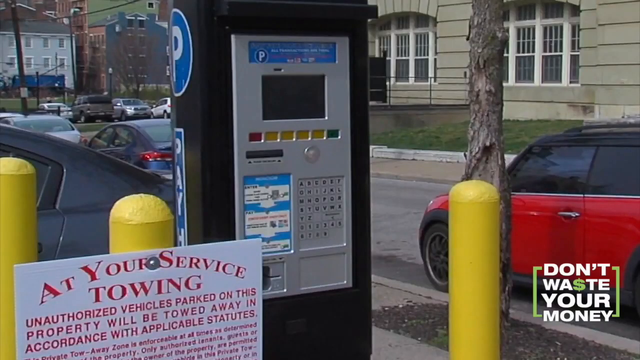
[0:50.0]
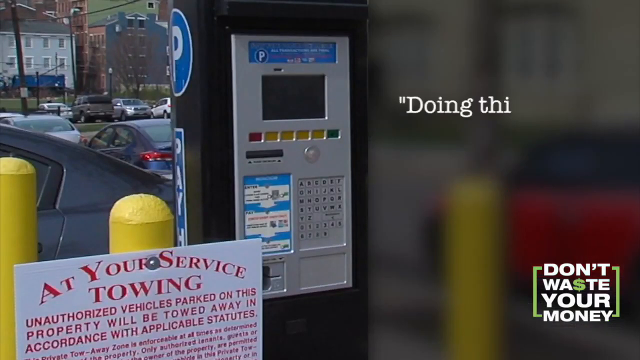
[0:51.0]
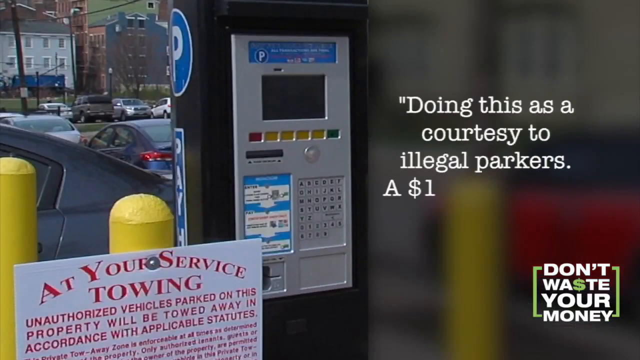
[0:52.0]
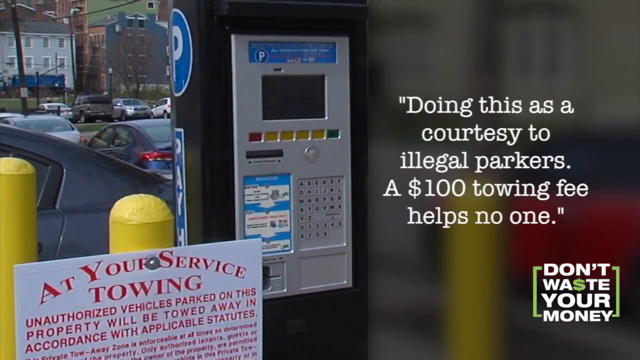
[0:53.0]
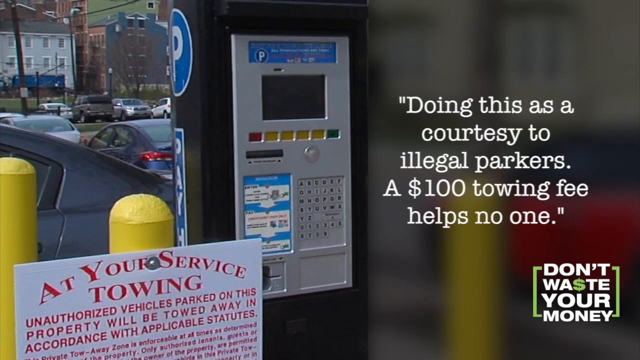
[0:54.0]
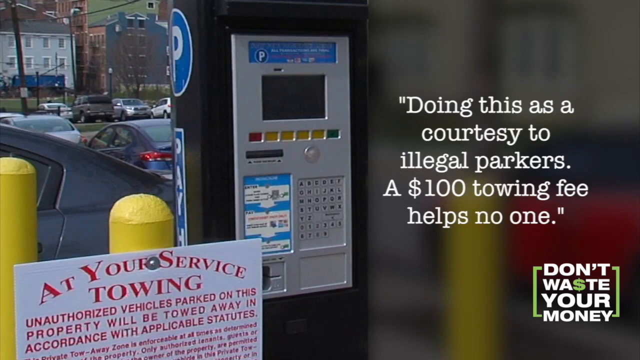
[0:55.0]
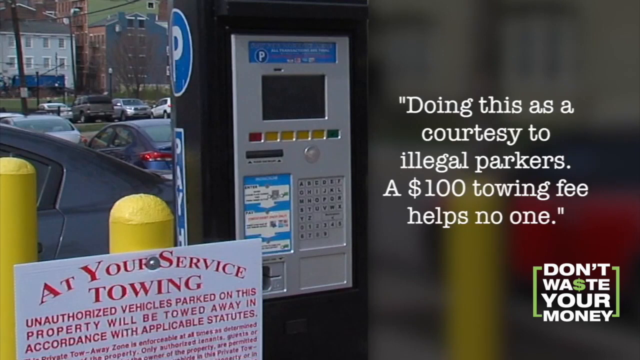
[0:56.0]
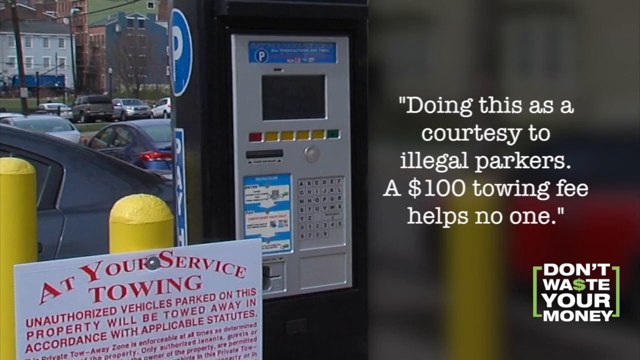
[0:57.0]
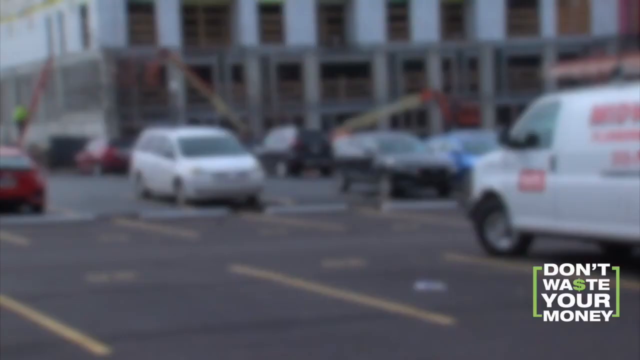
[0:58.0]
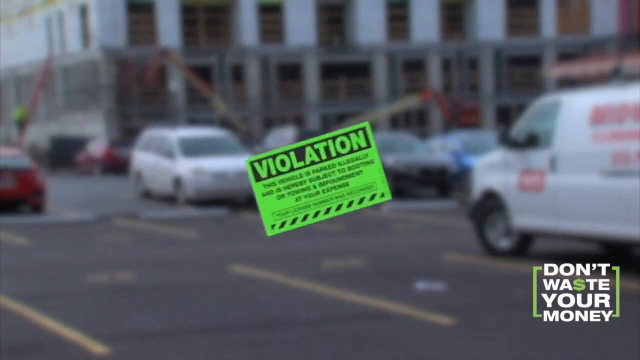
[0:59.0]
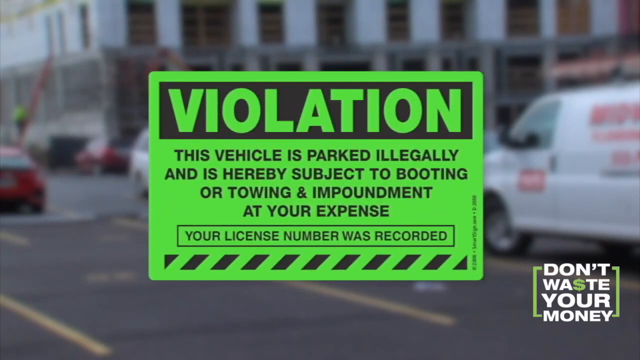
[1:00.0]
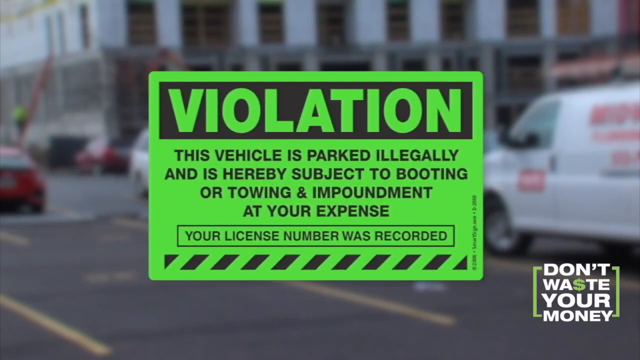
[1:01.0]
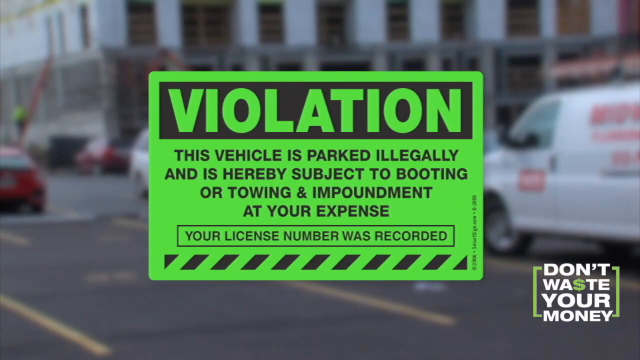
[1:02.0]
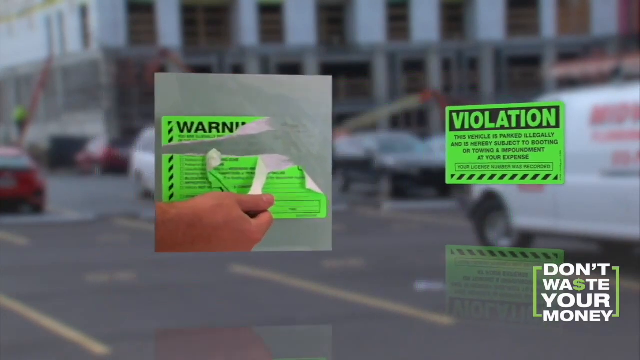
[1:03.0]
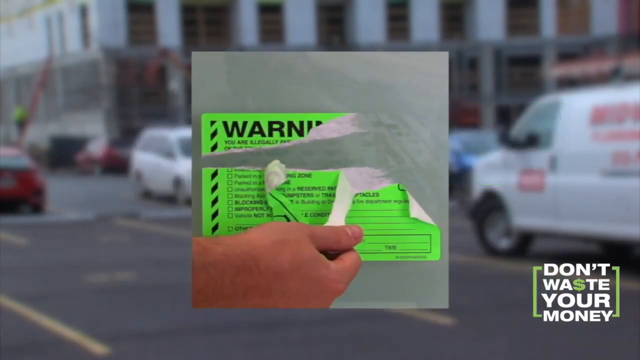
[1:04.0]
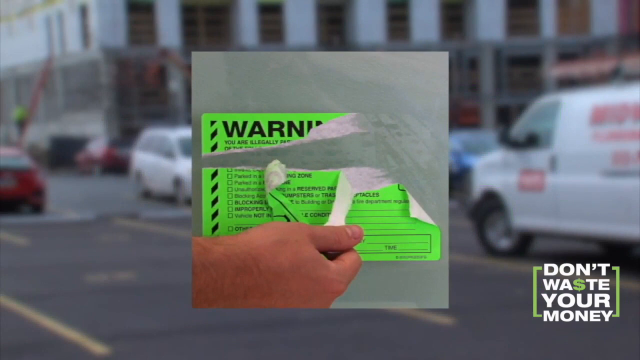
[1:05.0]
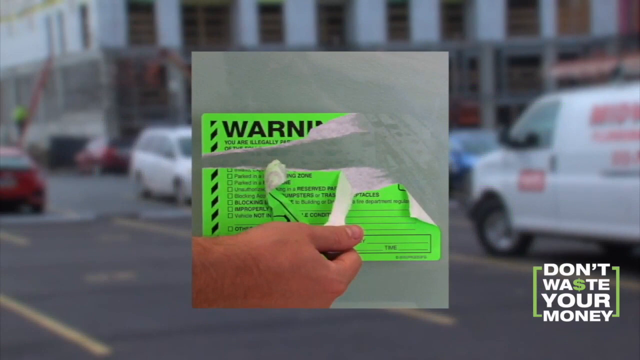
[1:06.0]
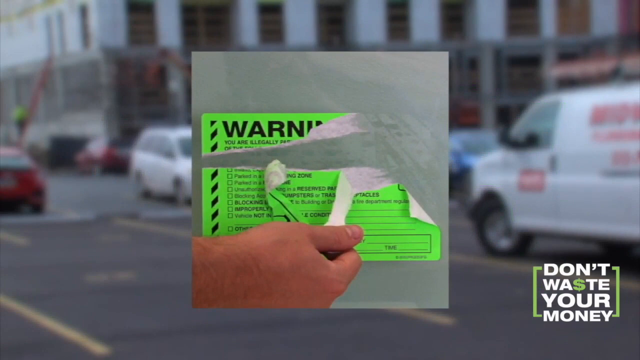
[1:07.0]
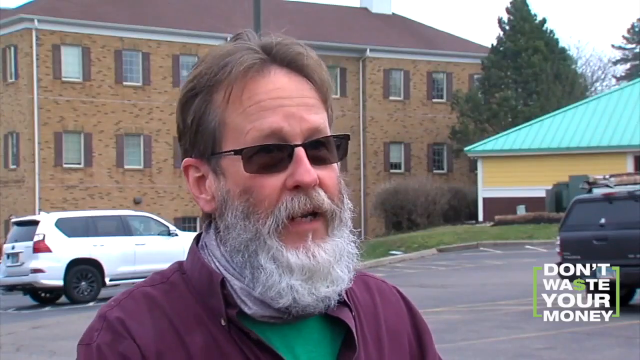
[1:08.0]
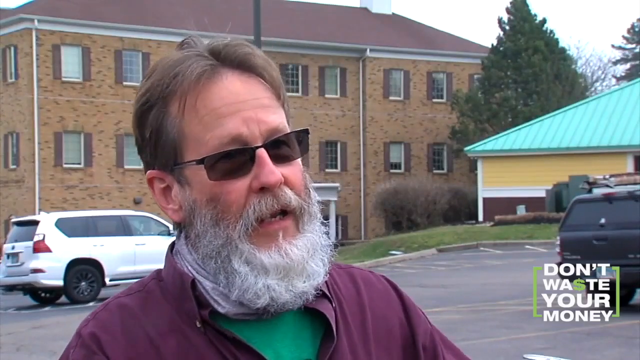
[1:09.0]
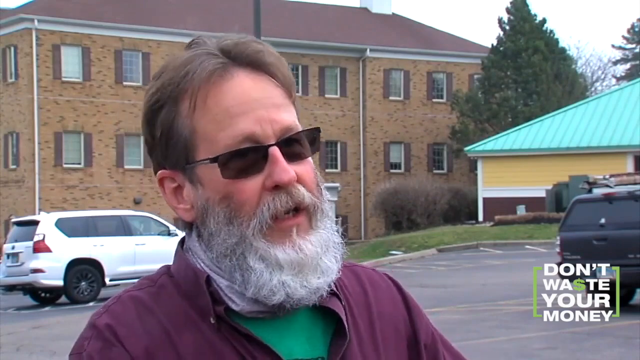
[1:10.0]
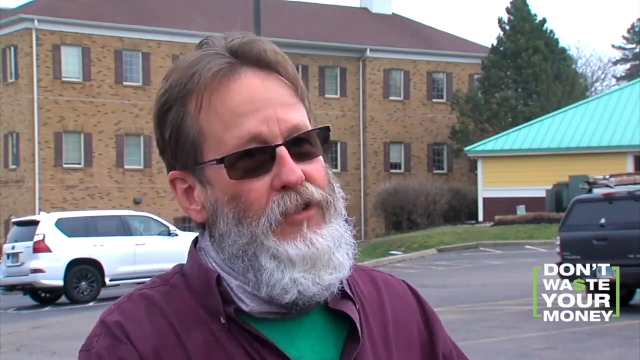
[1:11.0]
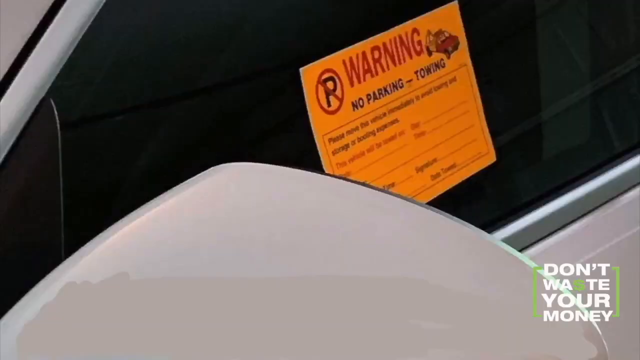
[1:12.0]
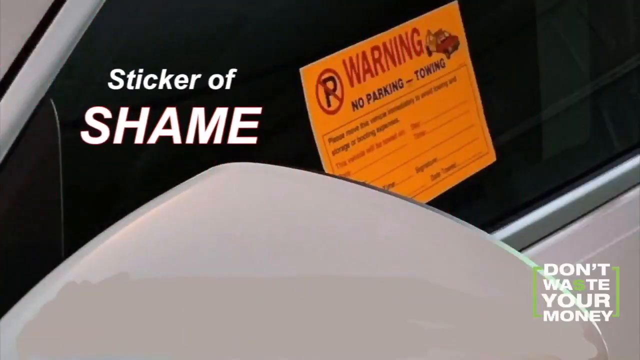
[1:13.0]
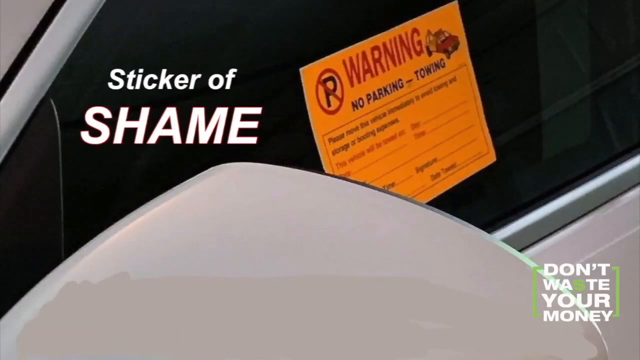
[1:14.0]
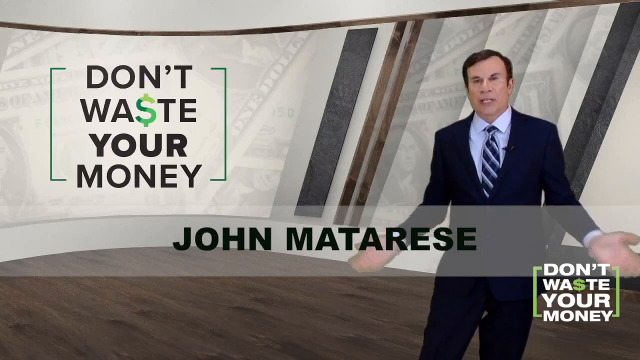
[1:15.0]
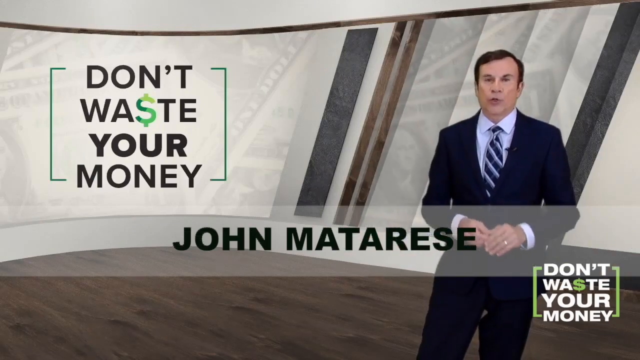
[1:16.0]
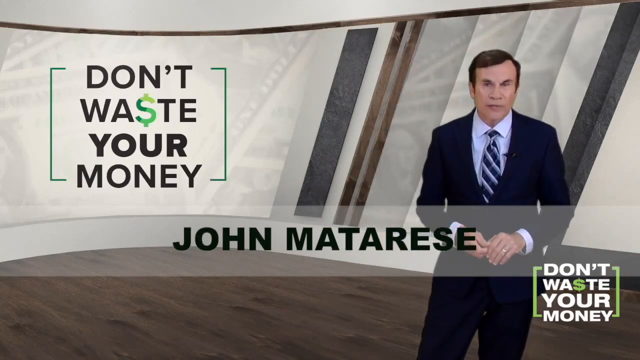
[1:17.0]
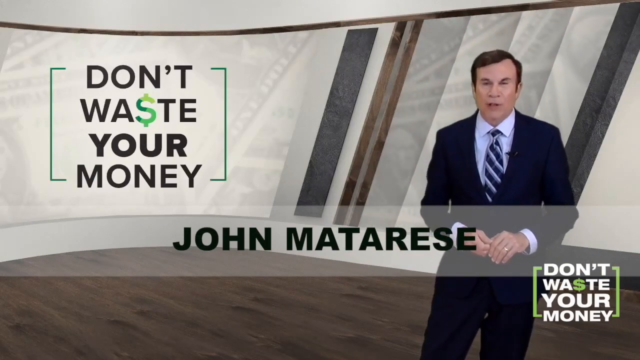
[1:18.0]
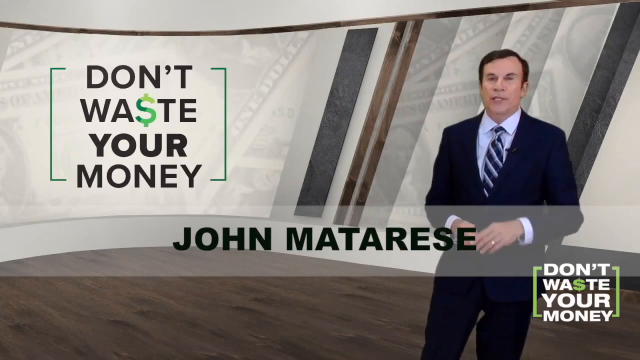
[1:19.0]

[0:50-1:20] The video appears to be for a report called Don't Waste Your Money, whose logo is in the lower right corner. The images all relate to no parking or towing decals. First, a pay kiosk in a parking lot is shown with a sign in front of it that says "At Your Service Towing." Text appears on the right side of the screen reading "Doing this as a courtesy to illegal parkers. A $100 towing fee helps no one." Next is a close-up of a green no parking sticker that says "Violation. This vehicle is parked illegally and is hereby subject to booting or towing and impoundment at your expense. Your license number was recorded." Then someone is shown ripping this label off a car, with part of it missing and in someone's hand at the bottom. A man with a full gray beard and sunglasses is interviewed, speaking to someone off camera. There is a close-up of a no parking towing notice attached to a car, with the text "Sticker of Shame" appearing next to it. Finally, a man stands in a studio speaking to the camera; behind him the "Don't Waste Your Money" graphic appears on a screen, and his name, John Matarese, appears across the screen.